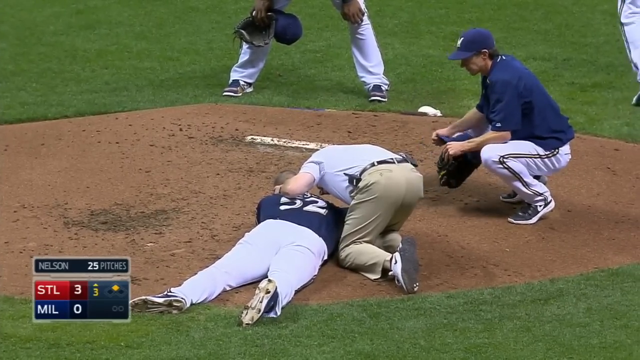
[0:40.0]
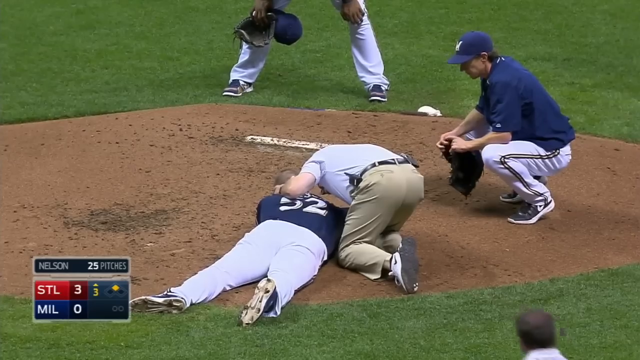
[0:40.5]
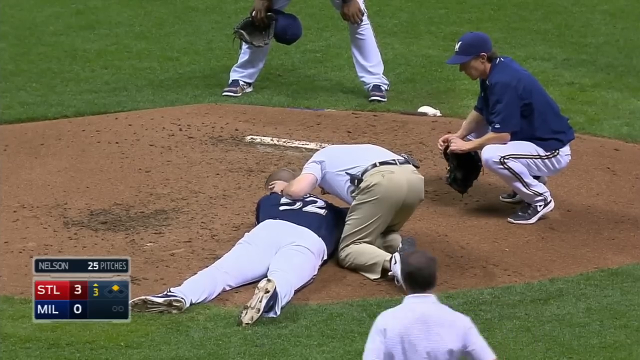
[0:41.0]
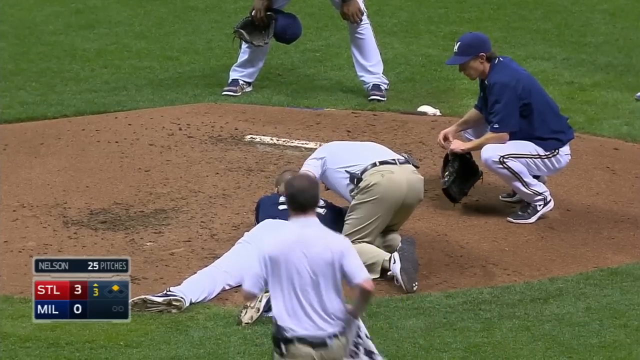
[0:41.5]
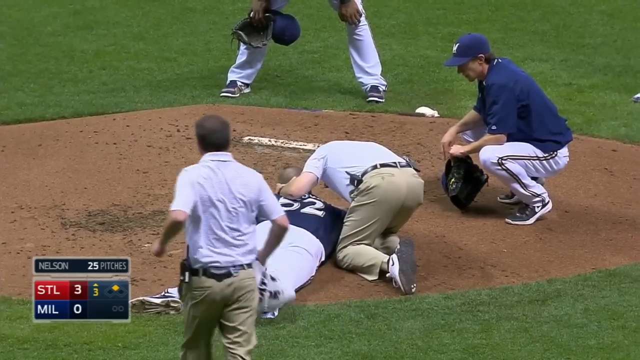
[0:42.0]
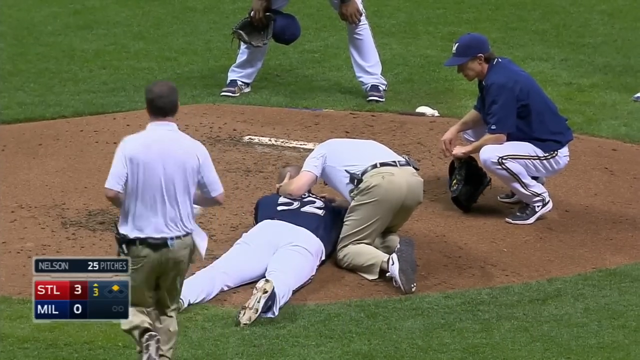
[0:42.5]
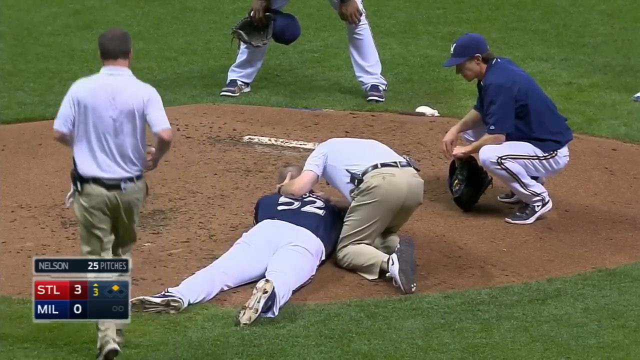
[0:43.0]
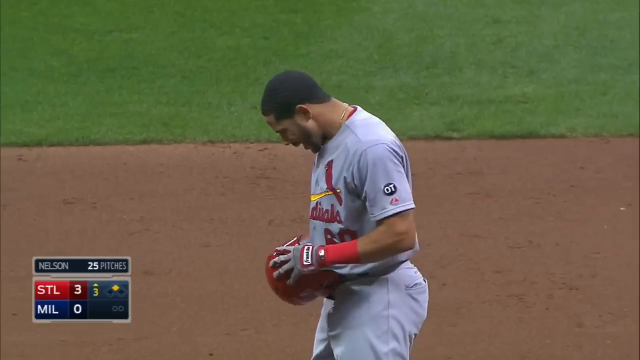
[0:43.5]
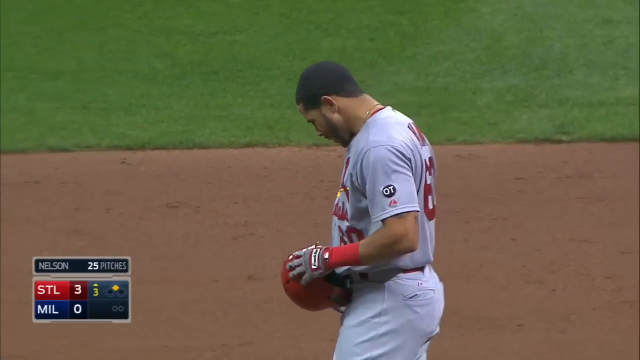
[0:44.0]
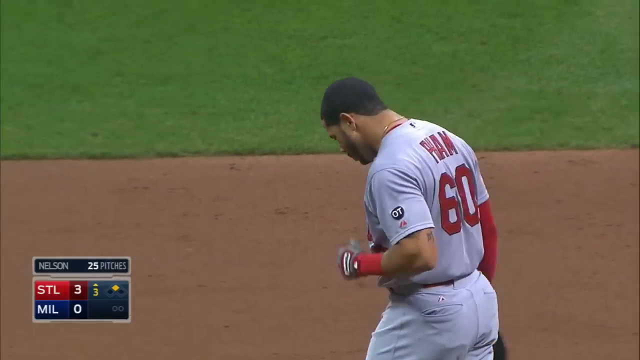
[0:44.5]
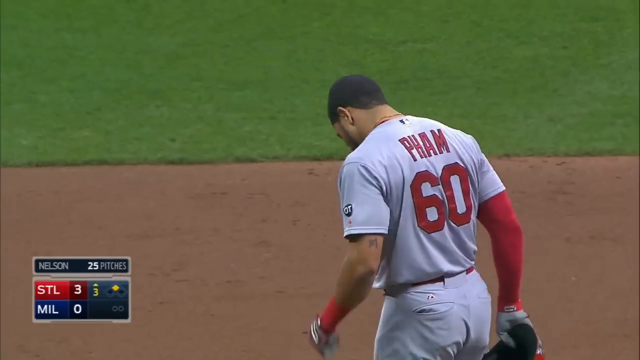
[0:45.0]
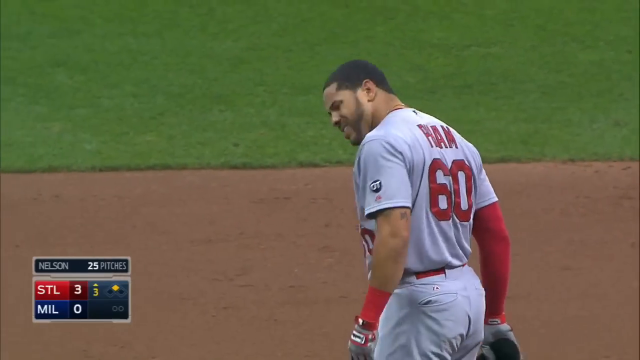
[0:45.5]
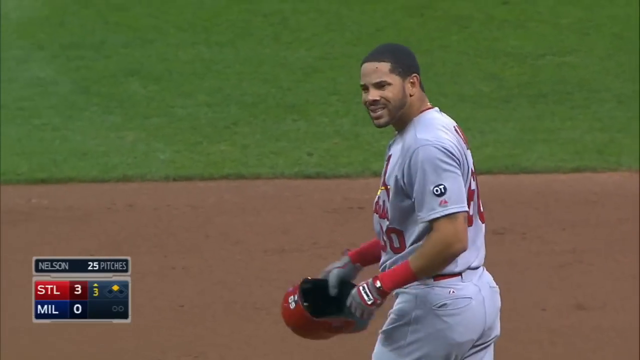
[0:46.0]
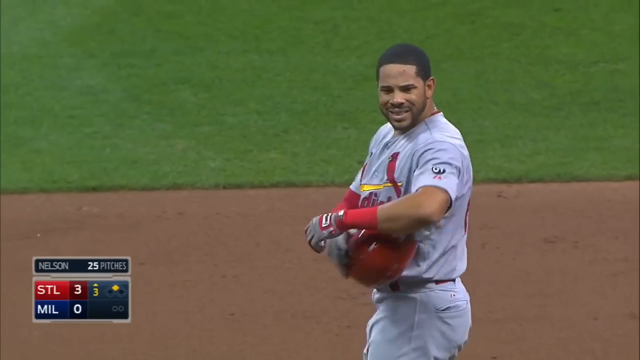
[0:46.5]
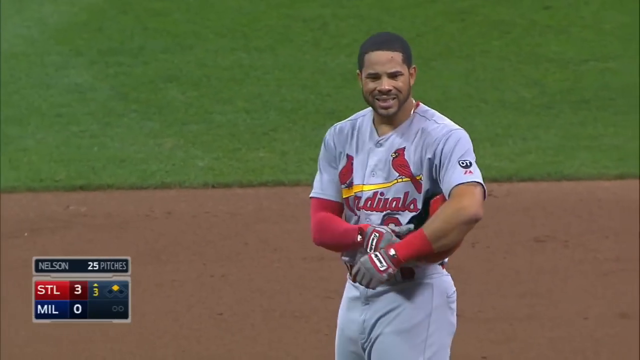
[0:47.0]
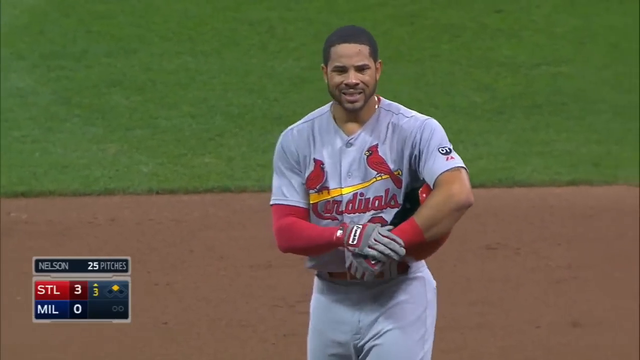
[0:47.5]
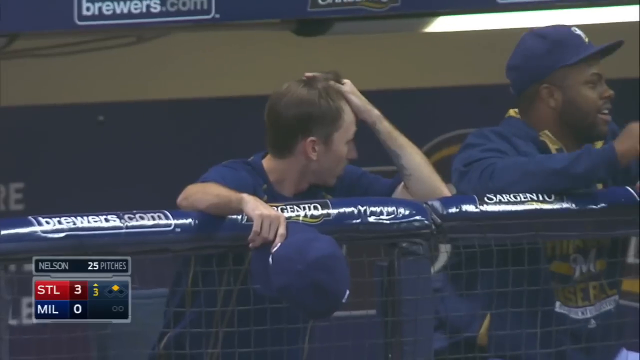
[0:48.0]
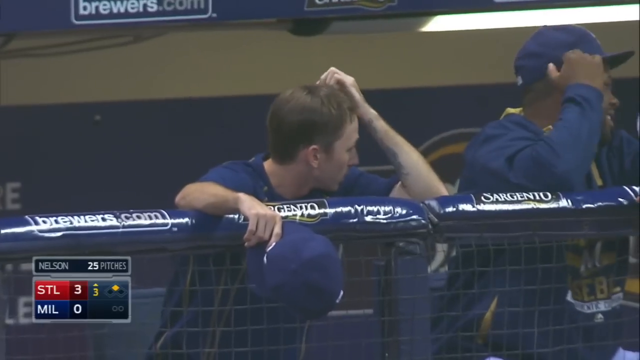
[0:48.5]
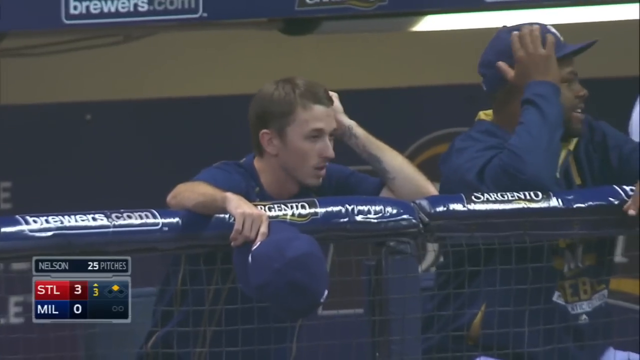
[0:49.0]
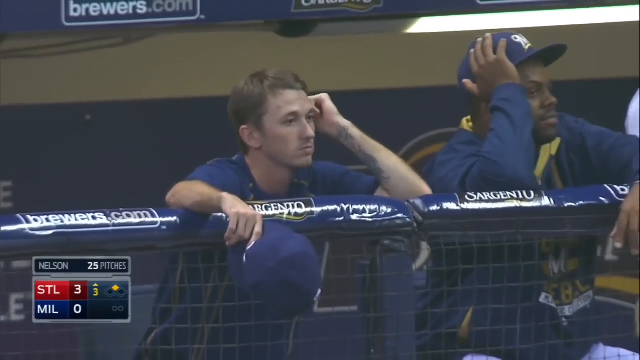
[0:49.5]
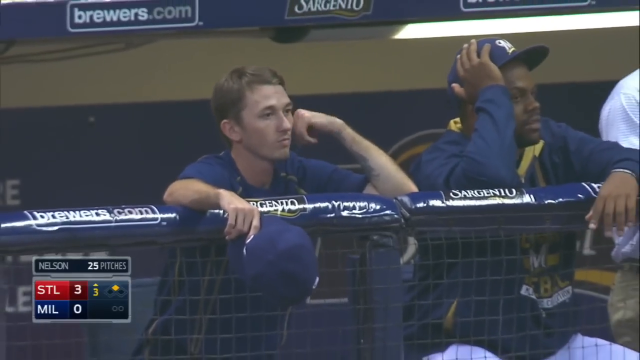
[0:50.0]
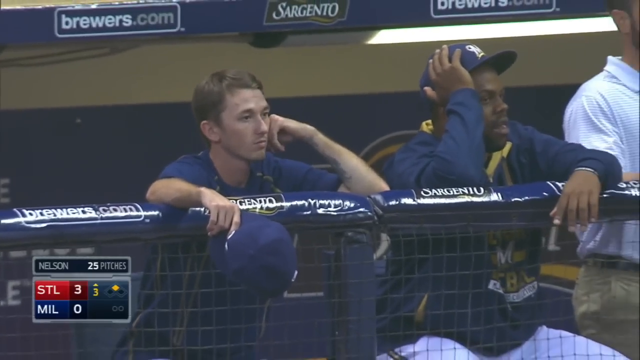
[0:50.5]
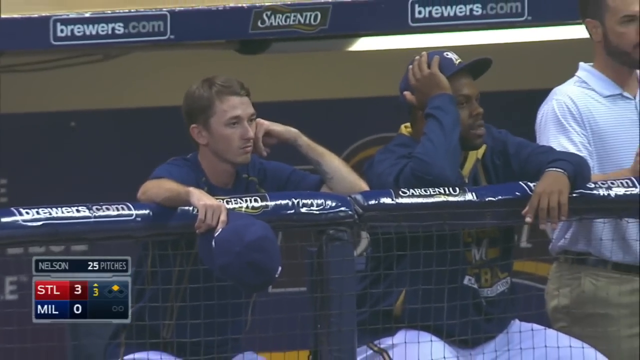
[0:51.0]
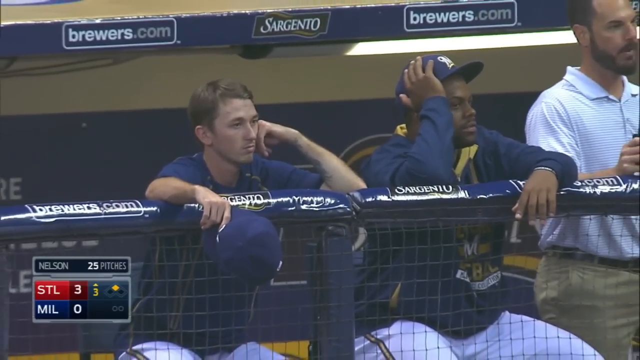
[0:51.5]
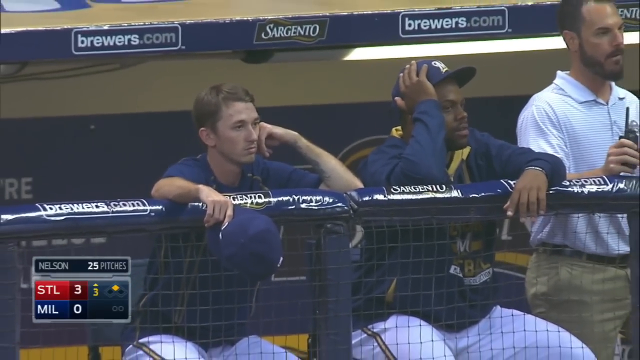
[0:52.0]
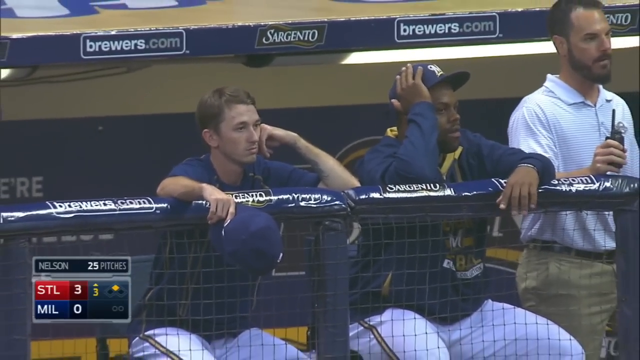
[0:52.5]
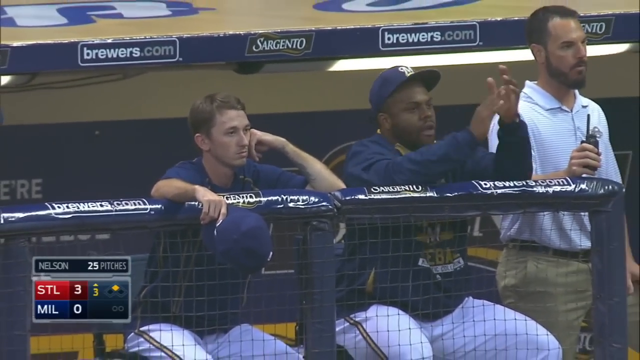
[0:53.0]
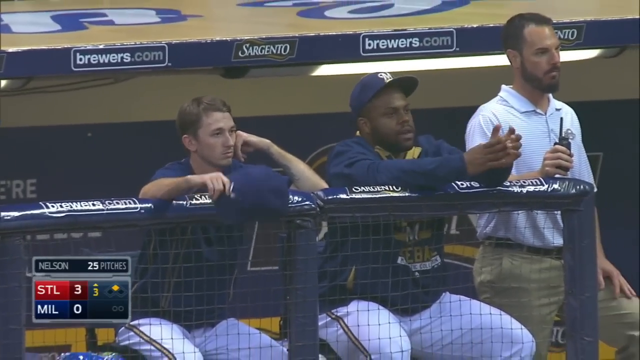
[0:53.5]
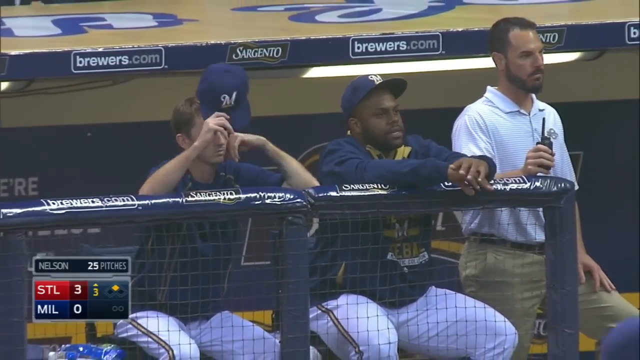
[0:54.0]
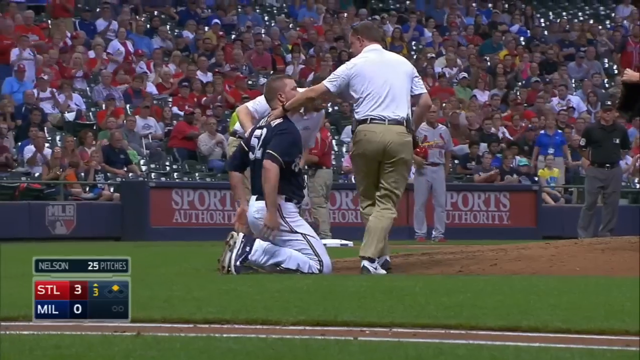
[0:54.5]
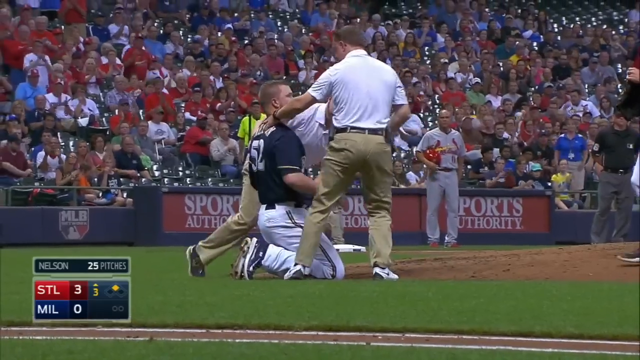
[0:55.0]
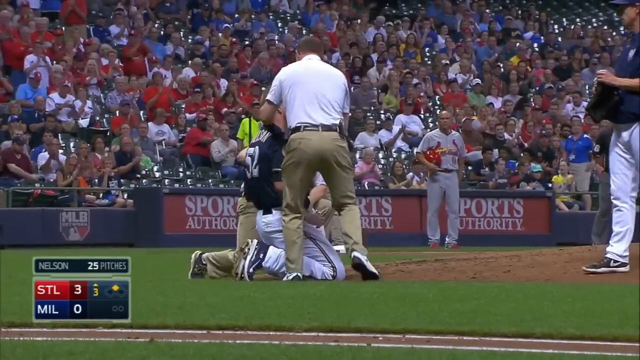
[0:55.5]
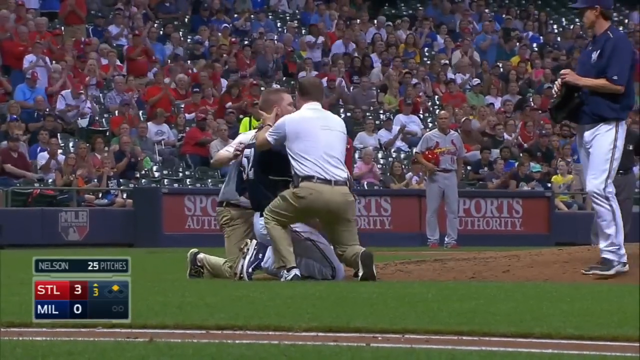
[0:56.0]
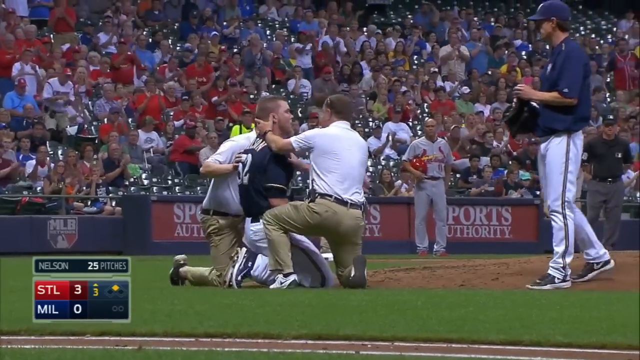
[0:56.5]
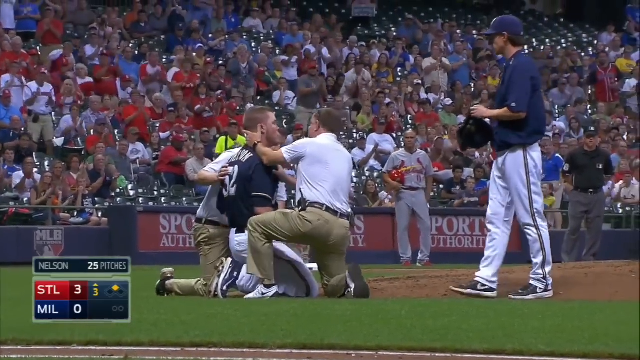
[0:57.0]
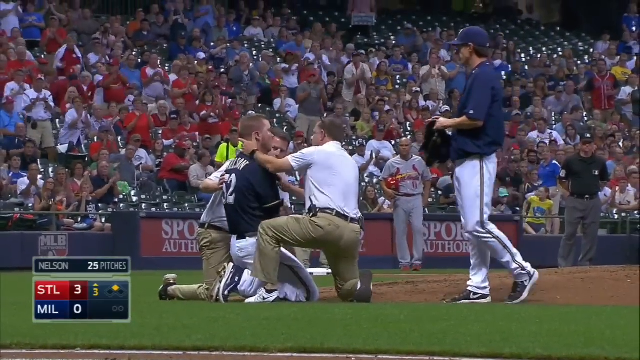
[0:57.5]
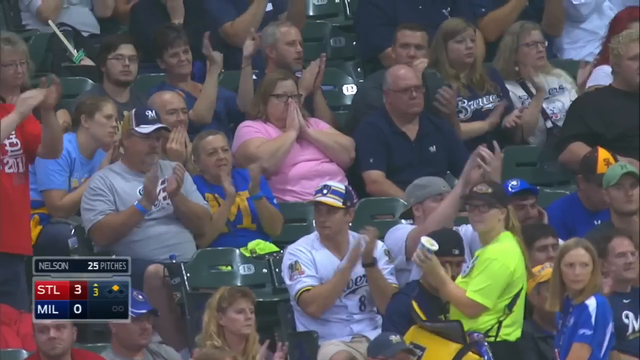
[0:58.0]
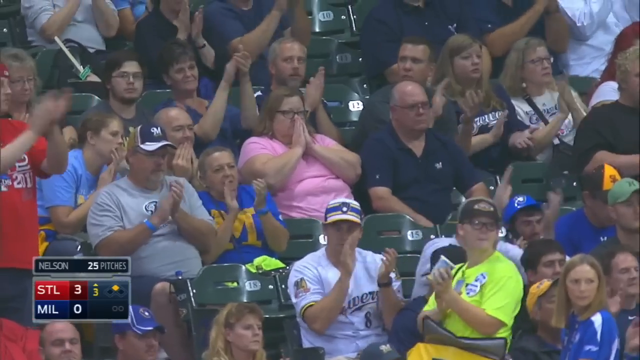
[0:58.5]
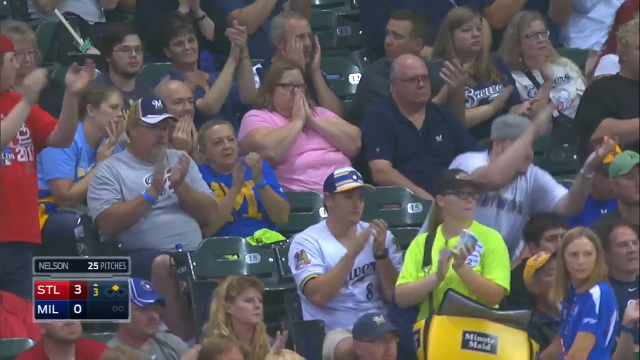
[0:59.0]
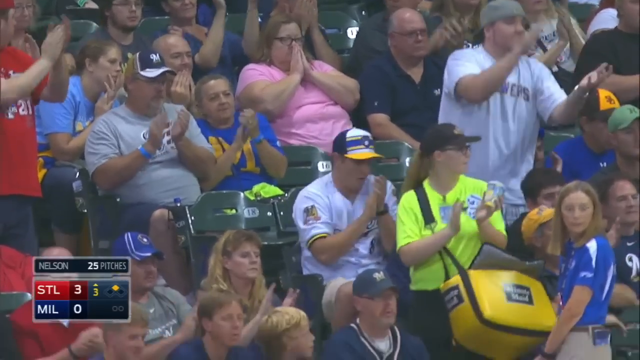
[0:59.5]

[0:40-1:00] Several players are crouched next to Milwaukee's number 52, the pitcher Nelson, who lies on his stomach with his feet askance and his hands clutched near his upper chest. He moves his head, showing he is conscious. Pham, who hit the ball, stands on second base looking grief-stricken. The scene changes to two Milwaukee players in the dugout, both with their hands to their foreheads. In the Brewers' dugout people cheer as Nelson gets up to his knees, supported by a player on his left and a trainer on his right, possibly about to rise to his feet. The scene then changes to the crowd, where Milwaukee fans clap, some of them standing, looking concerned.